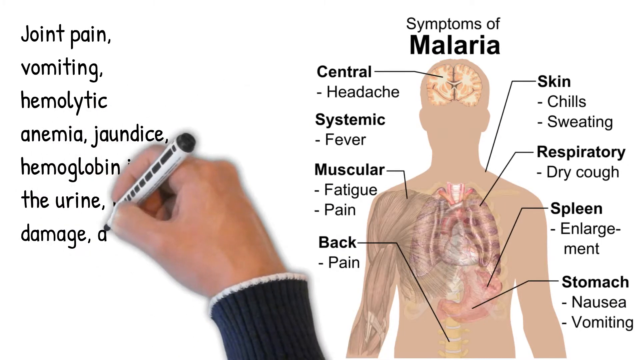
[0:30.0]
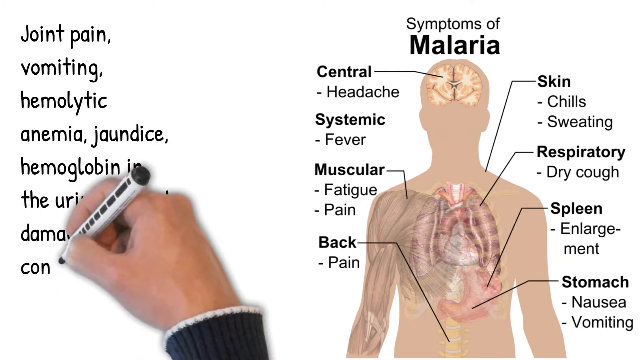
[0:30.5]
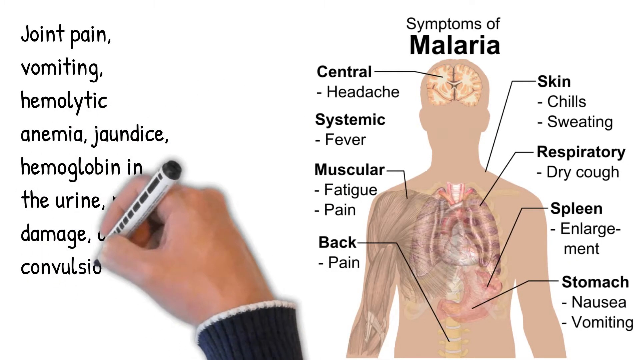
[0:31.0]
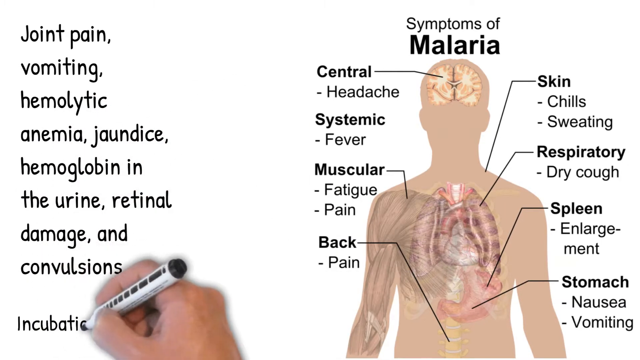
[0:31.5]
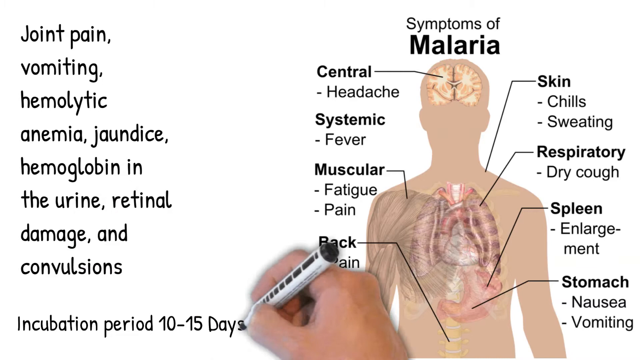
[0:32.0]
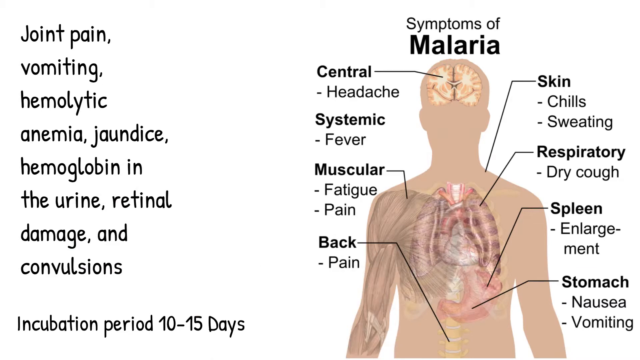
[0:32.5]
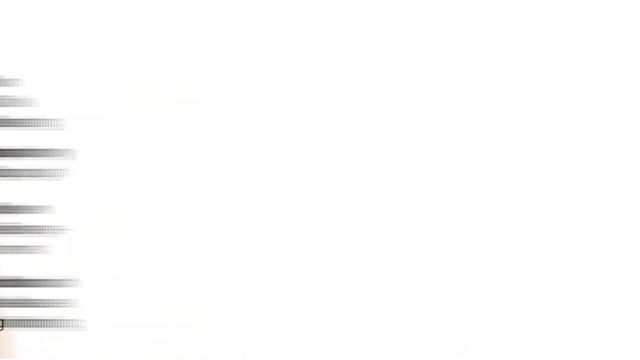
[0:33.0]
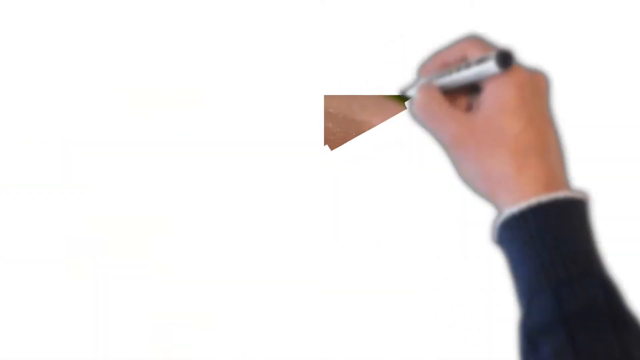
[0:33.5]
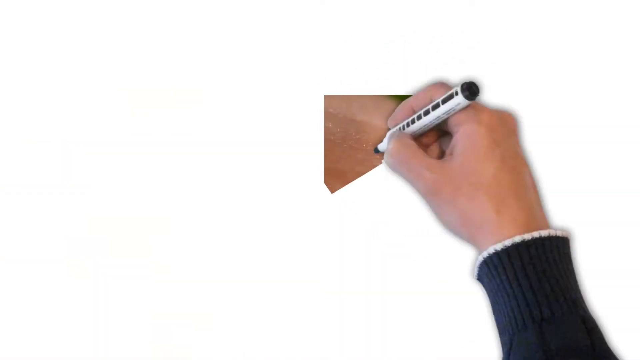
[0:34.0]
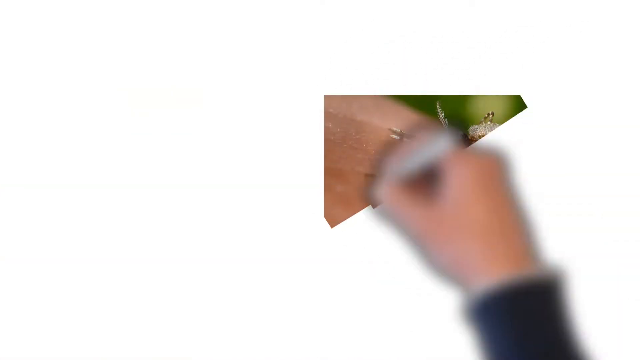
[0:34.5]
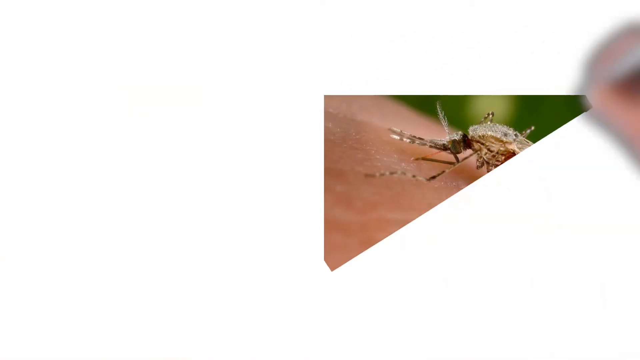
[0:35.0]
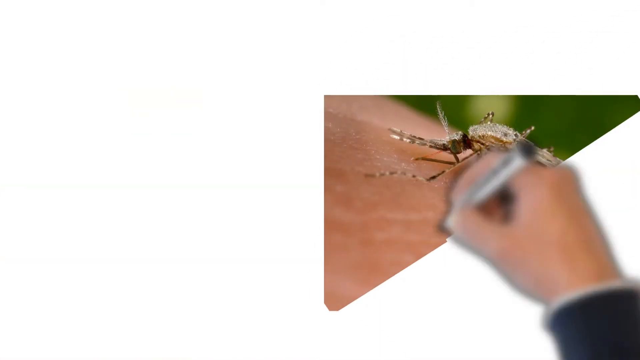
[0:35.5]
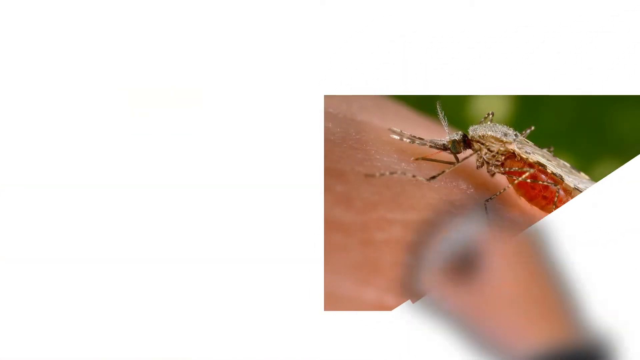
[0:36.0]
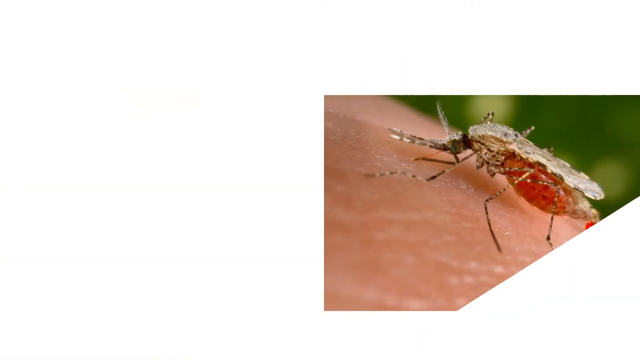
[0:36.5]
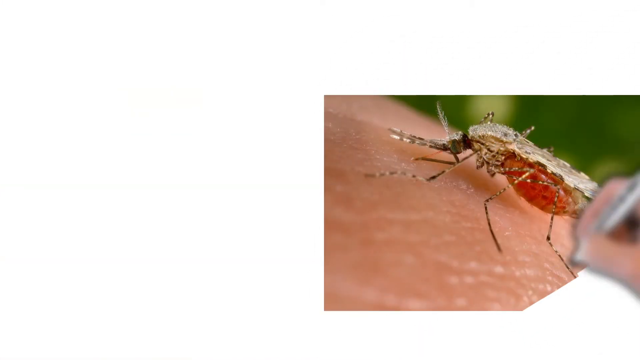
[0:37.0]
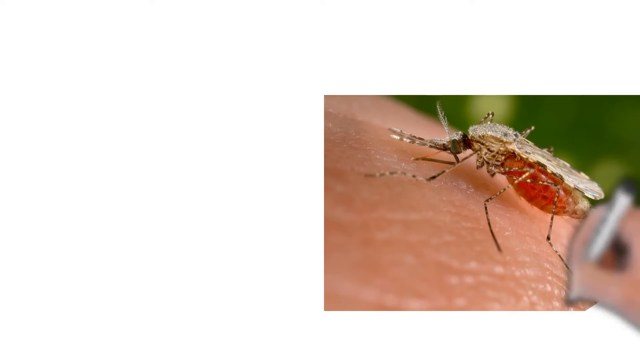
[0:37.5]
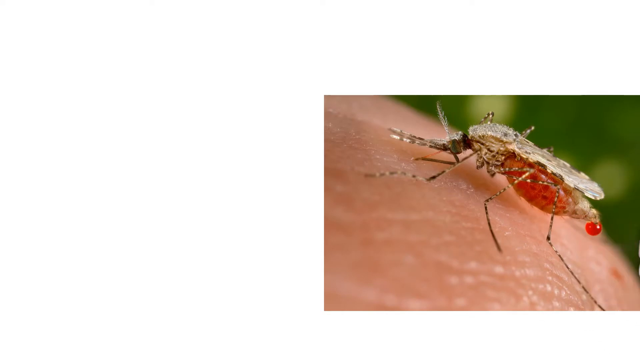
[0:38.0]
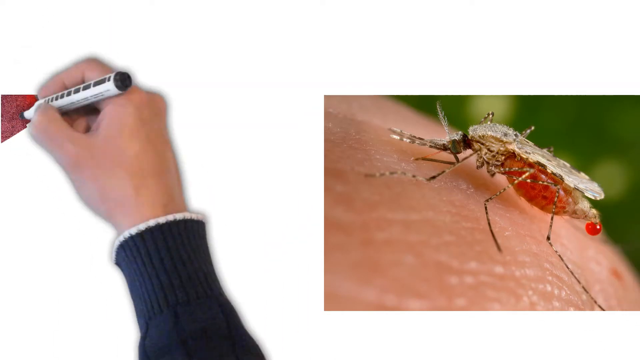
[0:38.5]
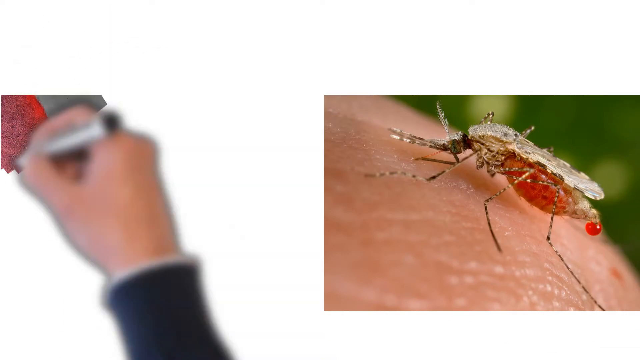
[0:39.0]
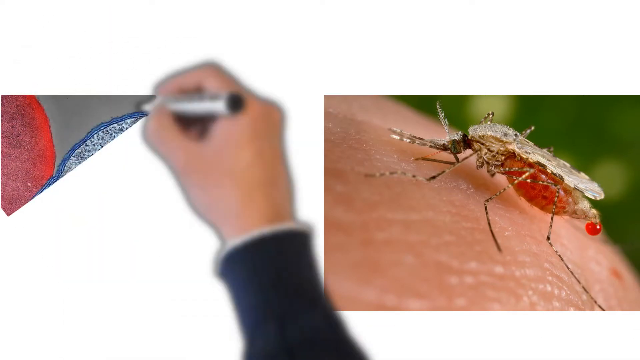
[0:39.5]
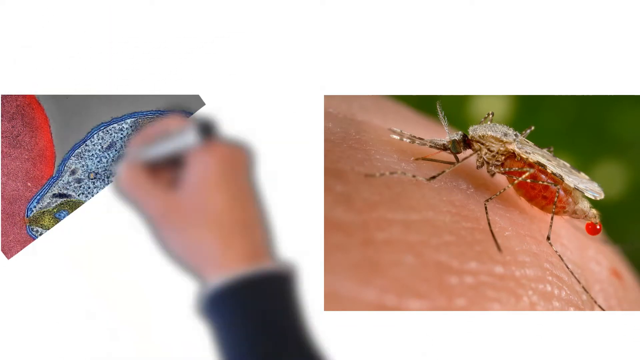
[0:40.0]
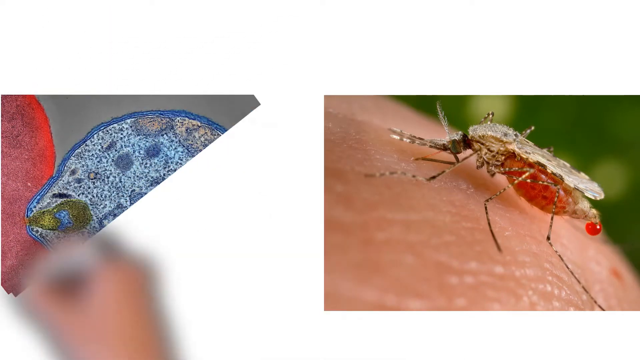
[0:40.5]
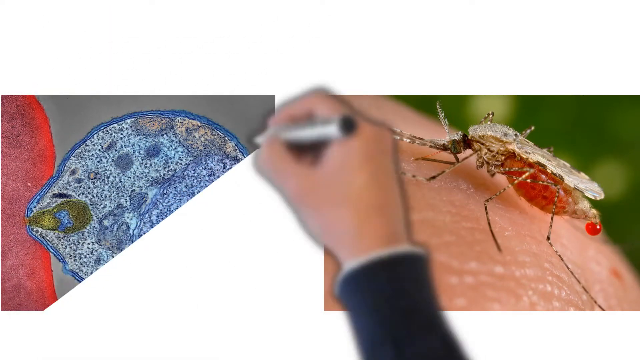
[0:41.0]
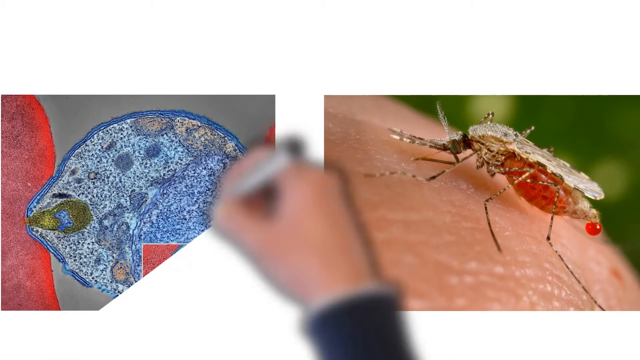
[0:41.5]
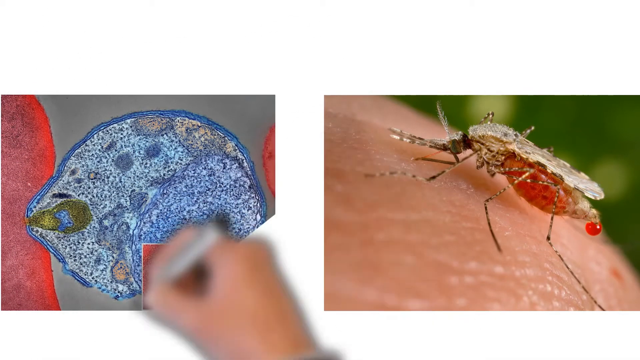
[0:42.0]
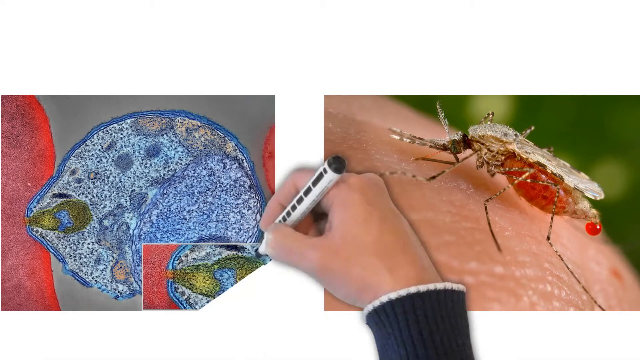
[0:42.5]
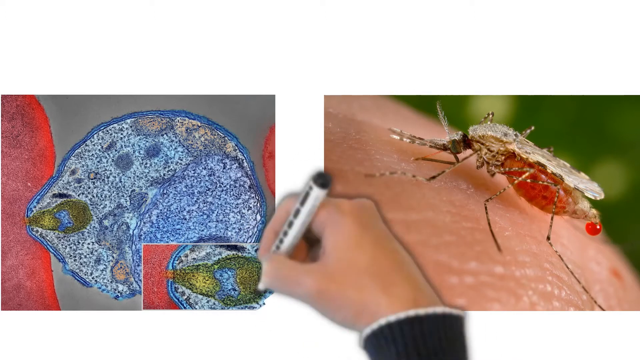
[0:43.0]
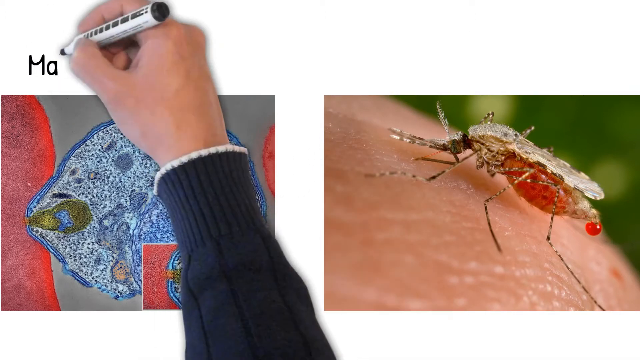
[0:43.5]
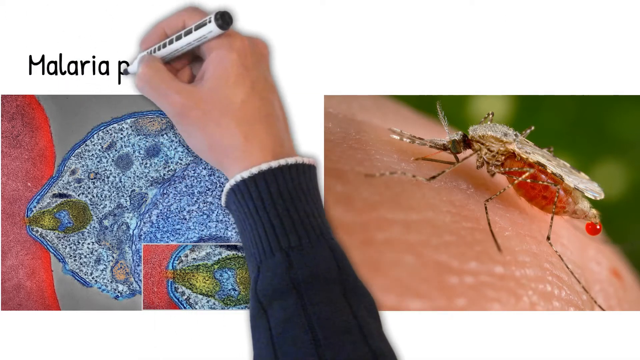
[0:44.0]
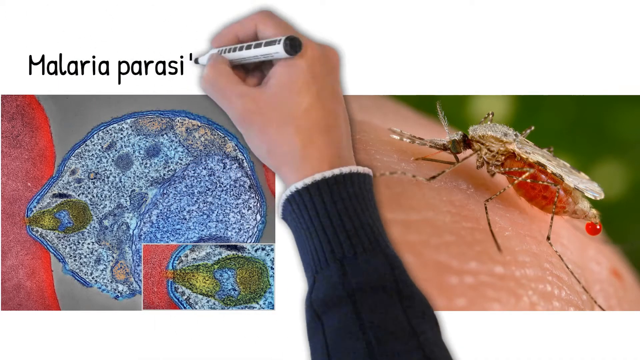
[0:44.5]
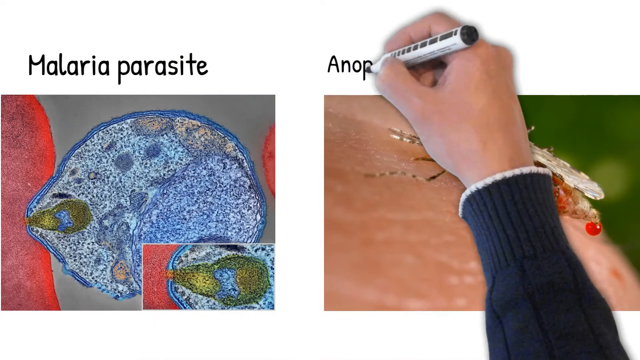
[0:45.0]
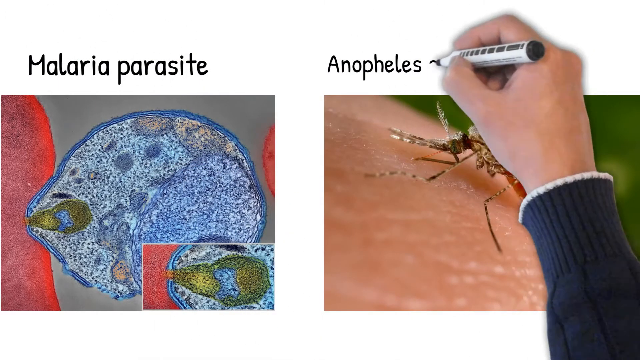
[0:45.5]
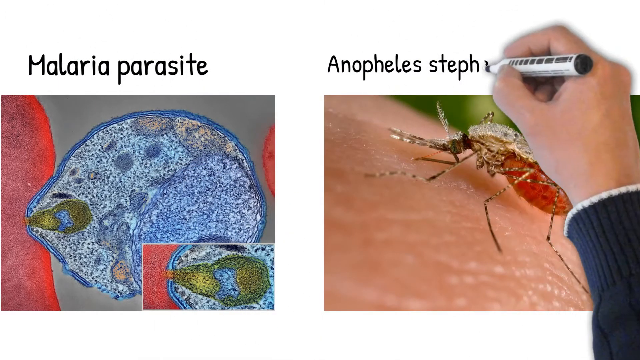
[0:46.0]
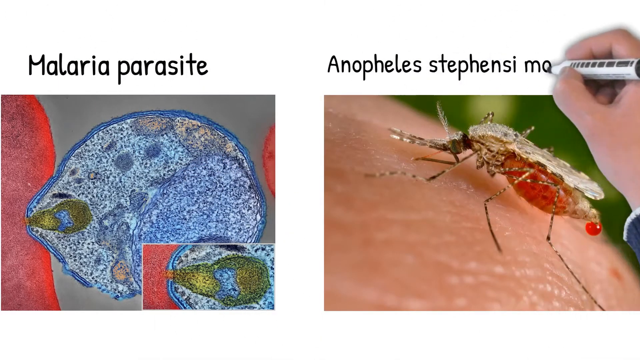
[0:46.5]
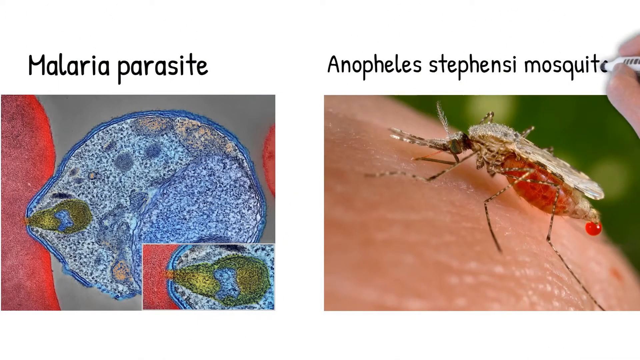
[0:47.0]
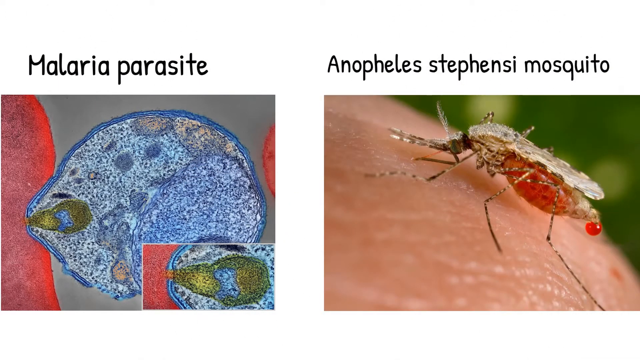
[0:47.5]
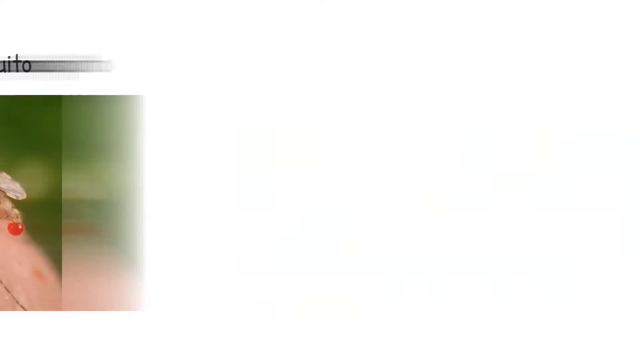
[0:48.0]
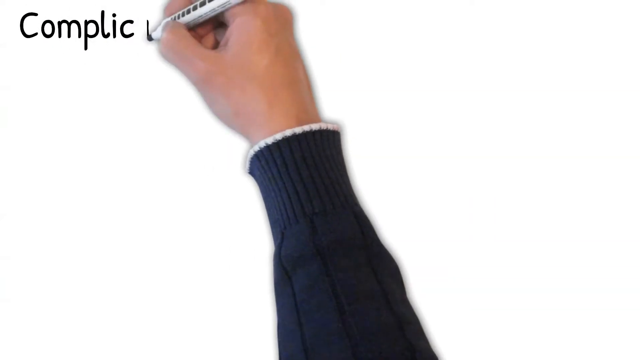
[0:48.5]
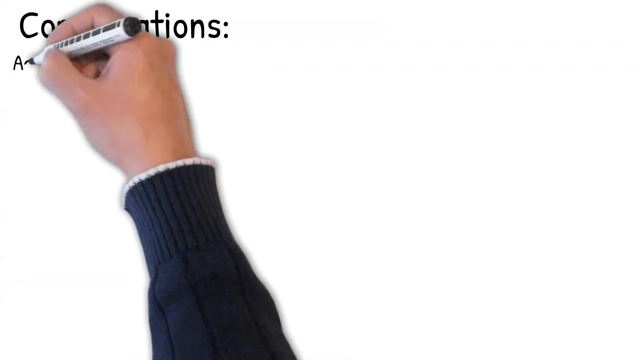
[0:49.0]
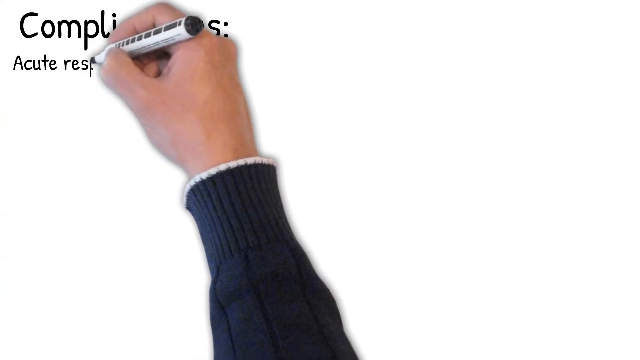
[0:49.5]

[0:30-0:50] The screen has a plain white background like a whiteboard. A hand holding a marker pen appears to be writing the text on the left, which reads "joint pain, vomiting, haemolytic anemia, jaundice, hemoglobin in the urine, retinal damage, and convulsions. Incubation period, 10 to 15 days". The screen then changes to another plain white background. The hand appears to draw an image of a mosquito on the right, a photograph of a mosquito presented as part of the animation, and on the left there is a photograph of the parasite. Each photograph has a label at the top: the left one is labeled "malaria parasite", and the right one has a label beginning "anopheles" and ending "mosquito". The screen then changes again to another plain white background, and a header is written at the top reading "complications".